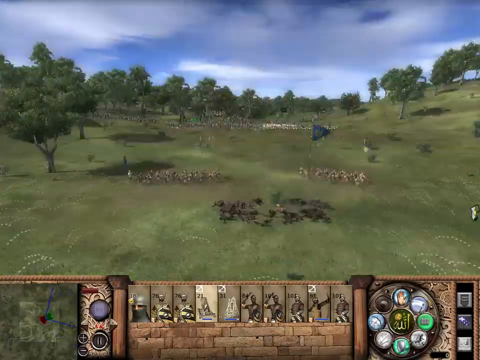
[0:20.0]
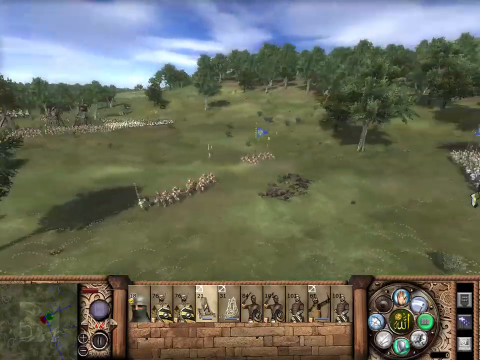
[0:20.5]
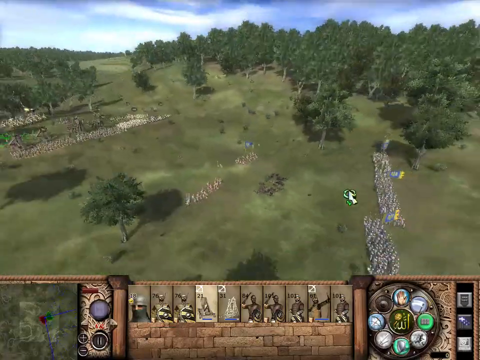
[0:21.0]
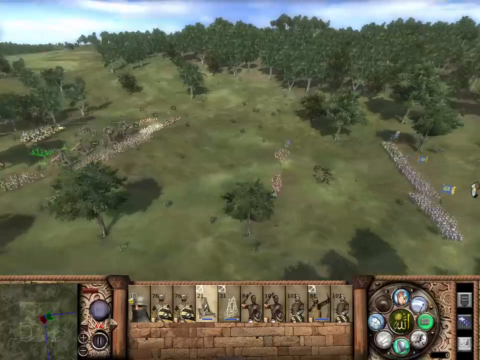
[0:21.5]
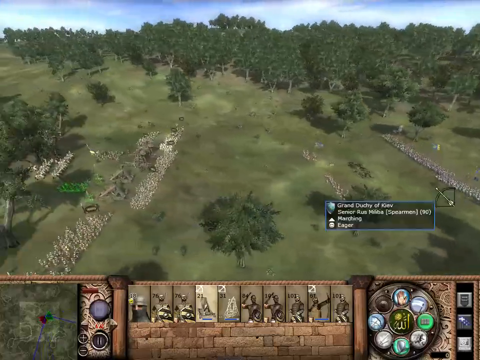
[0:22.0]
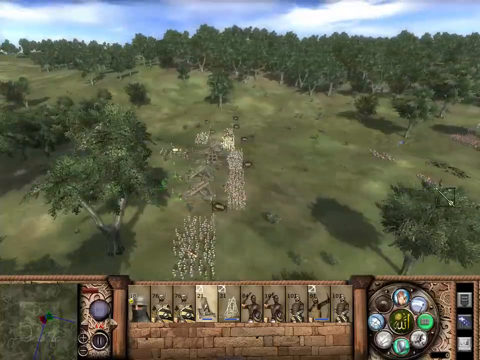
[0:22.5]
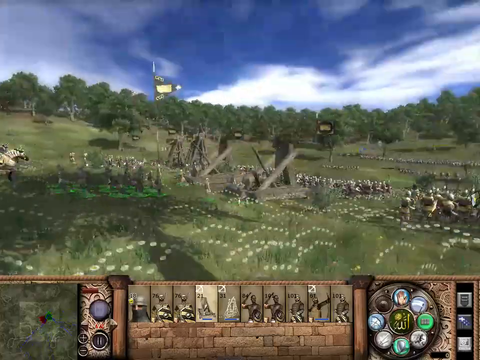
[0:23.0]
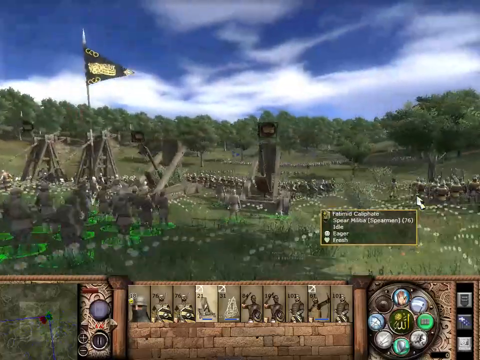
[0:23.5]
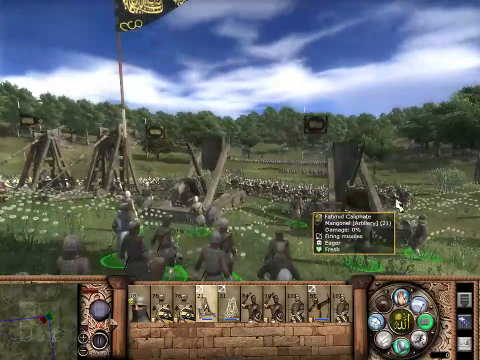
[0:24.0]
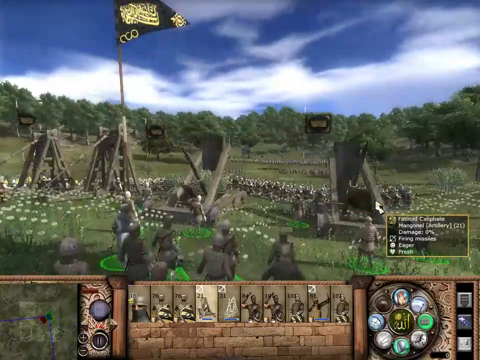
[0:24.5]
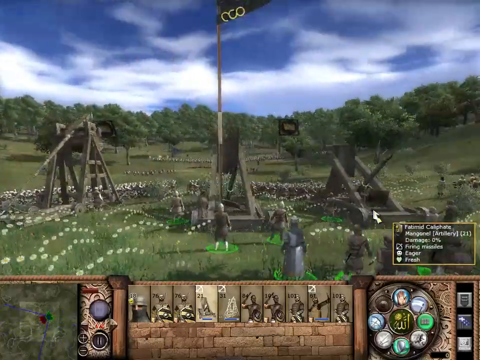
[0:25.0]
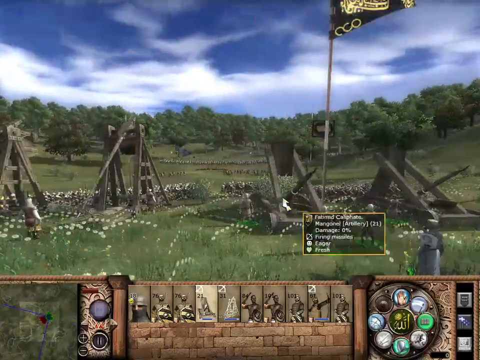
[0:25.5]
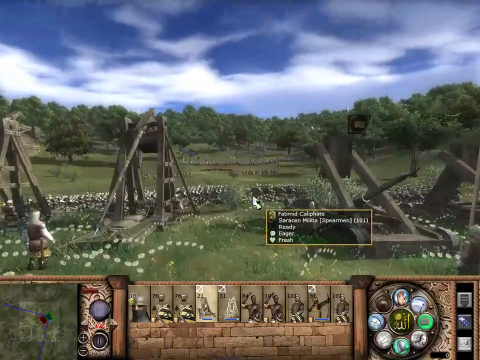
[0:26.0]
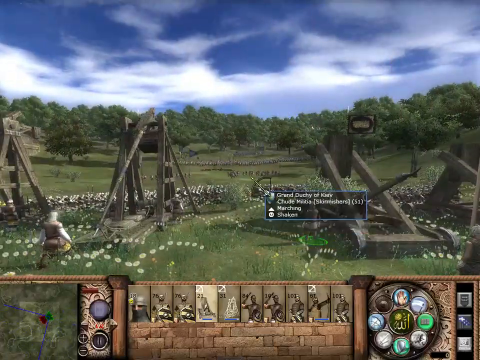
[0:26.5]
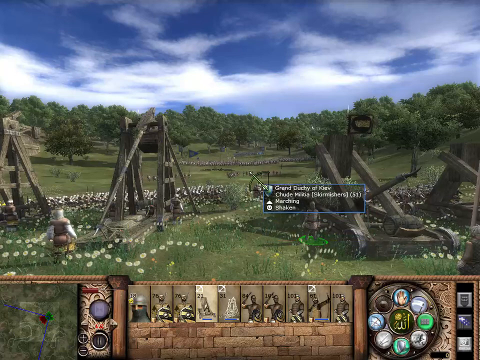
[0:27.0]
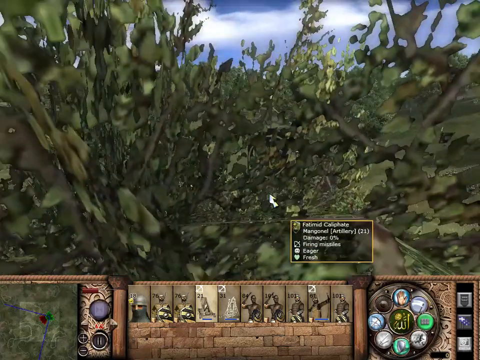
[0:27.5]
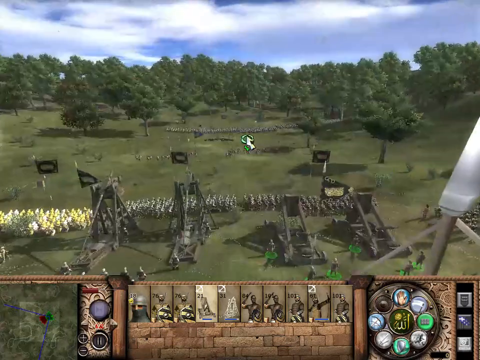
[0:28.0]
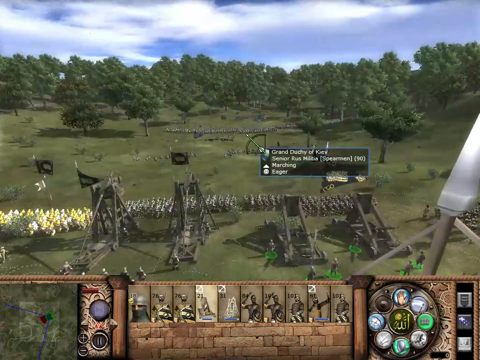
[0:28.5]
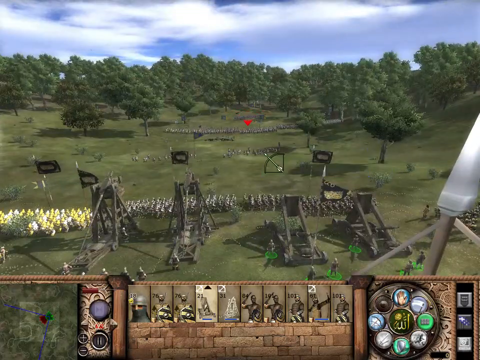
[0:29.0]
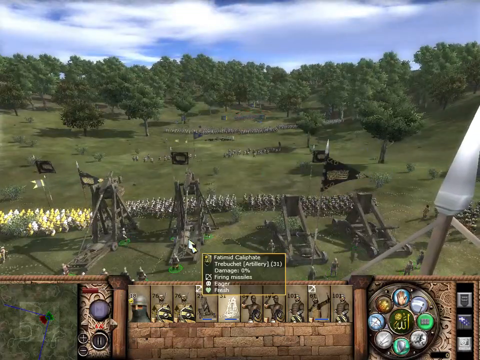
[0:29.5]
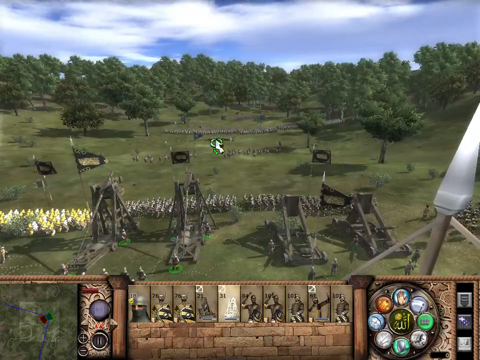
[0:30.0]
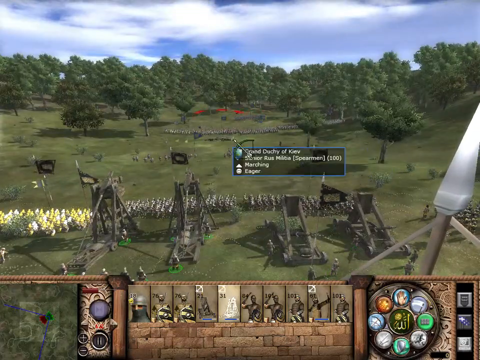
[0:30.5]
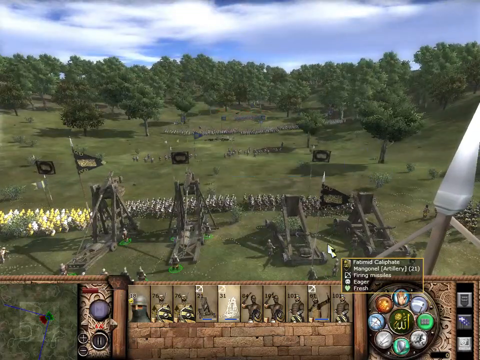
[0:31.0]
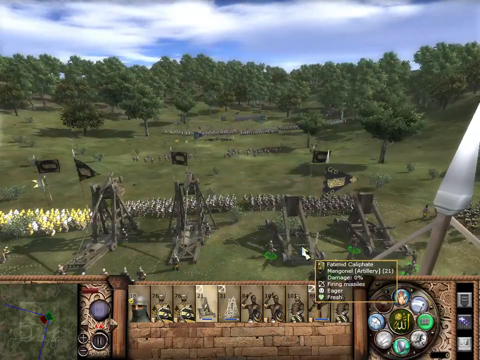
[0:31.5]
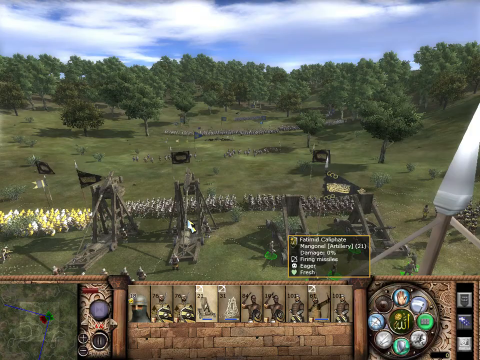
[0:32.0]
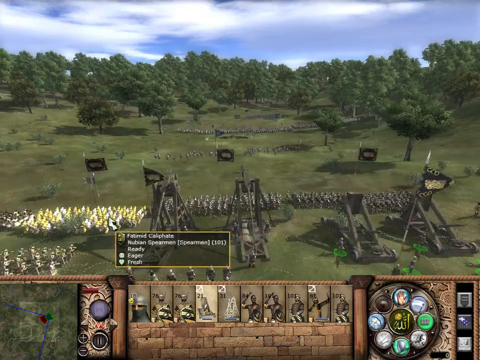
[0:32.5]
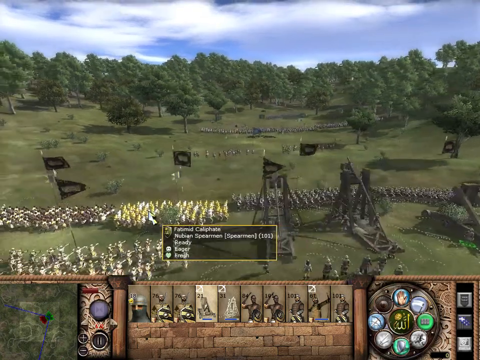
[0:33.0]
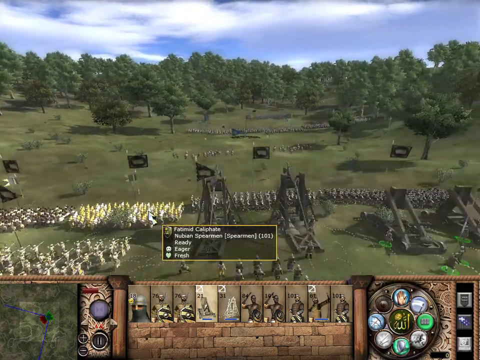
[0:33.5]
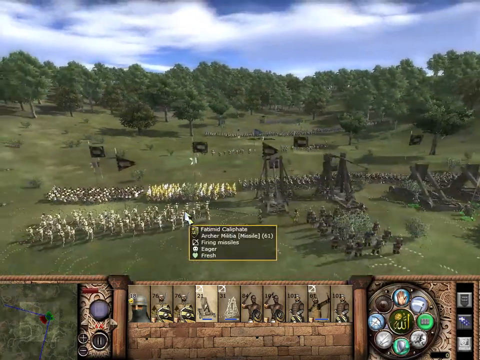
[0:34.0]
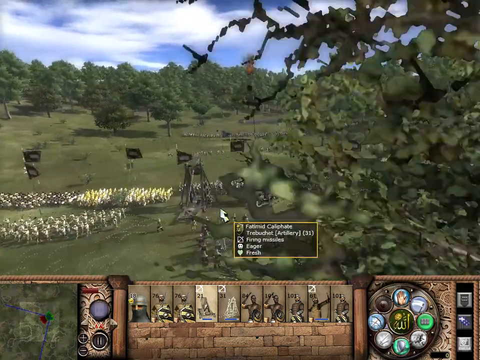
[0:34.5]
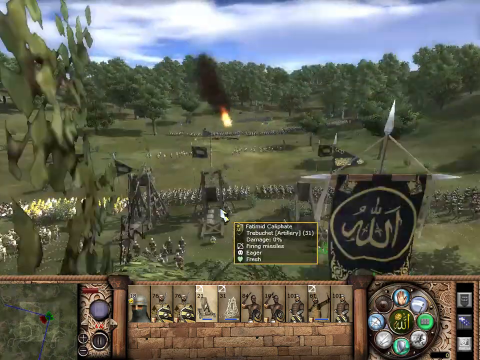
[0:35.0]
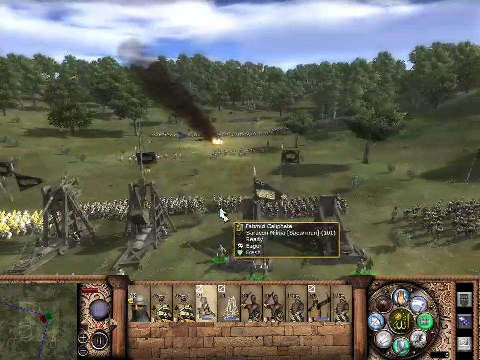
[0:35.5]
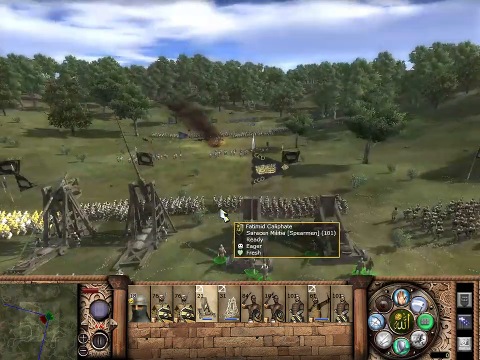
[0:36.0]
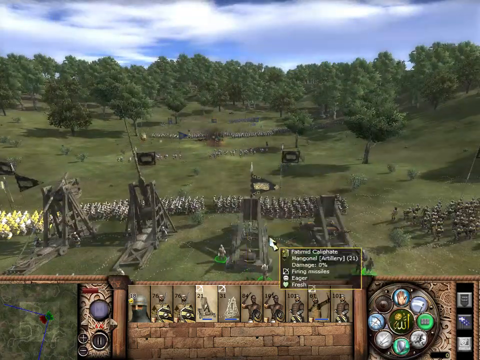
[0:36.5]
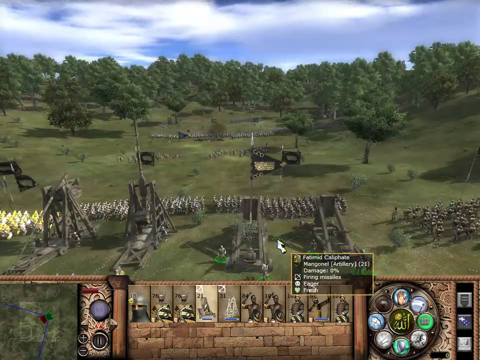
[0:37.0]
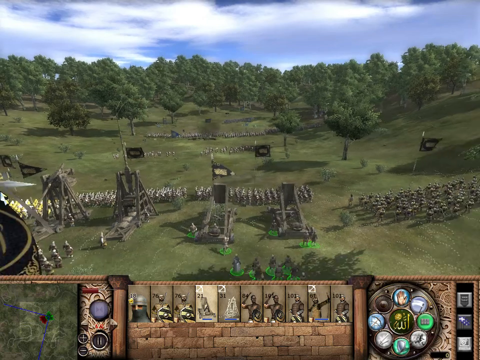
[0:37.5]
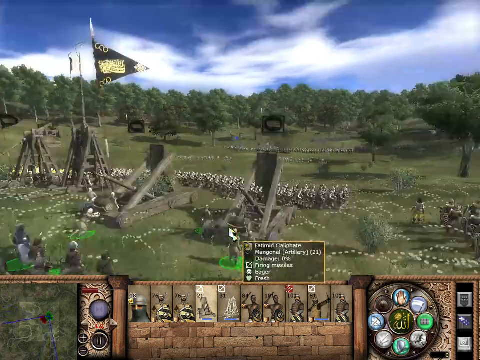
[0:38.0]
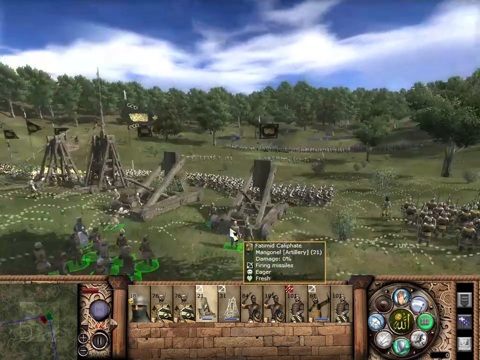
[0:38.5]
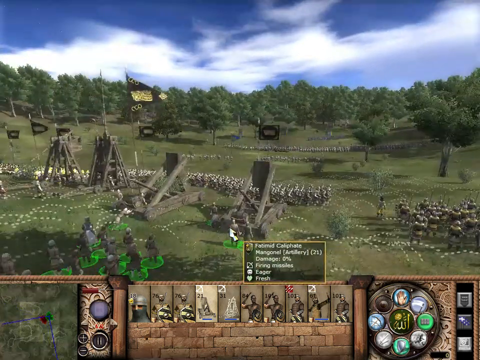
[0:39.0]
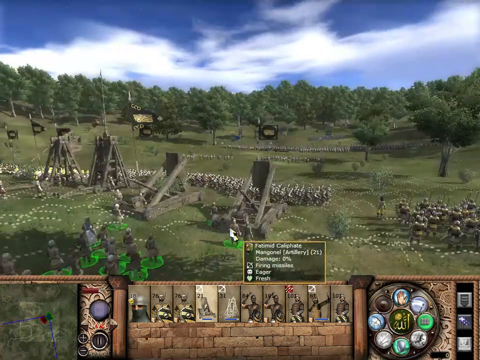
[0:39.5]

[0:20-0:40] The skies are still gray and cloudy with a little bit of blue, and there are a lot of trees and a lot of green. The setting looks almost like a field in the 1970s. What looks like one of the military machines that fires mortar shells is shown. The camera pans and turns, showing more trees and more sky, with no soldiers visible at first; then some soldiers start to appear. On the other side are artillery machines that look like they are made of wood. The orange or gold and black flag marks one side fighting the other. One soldier comes through. The camera moves through some trees, then another view shows a more open field with four of the artillery machines. The game's cursor arrow points to something, apparently picking spots to fire the artillery shells.